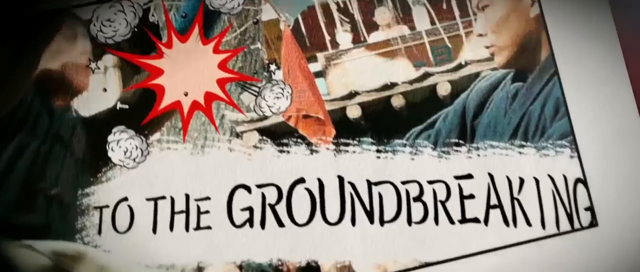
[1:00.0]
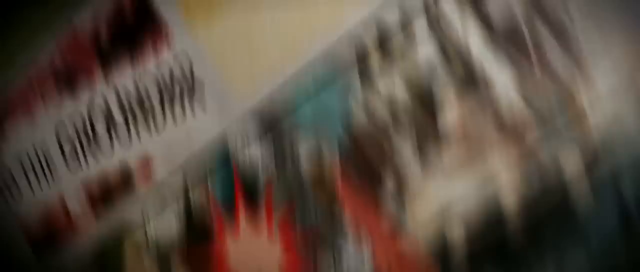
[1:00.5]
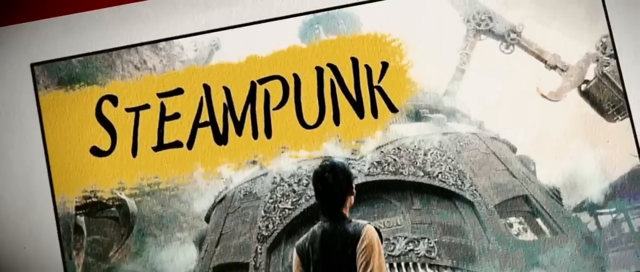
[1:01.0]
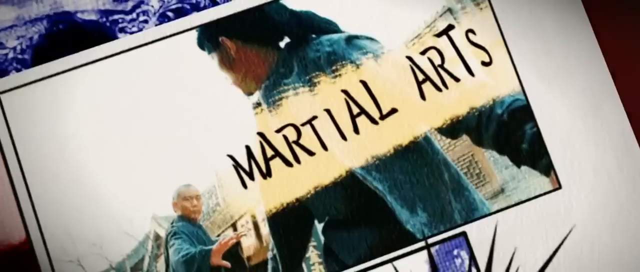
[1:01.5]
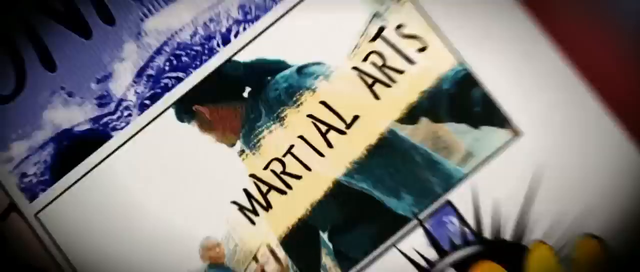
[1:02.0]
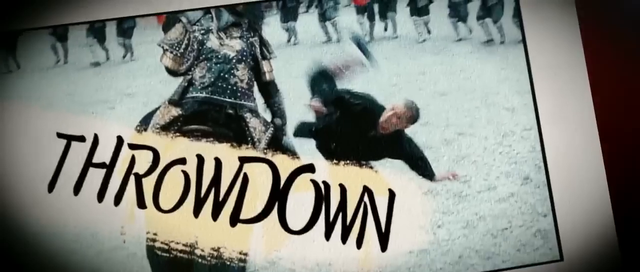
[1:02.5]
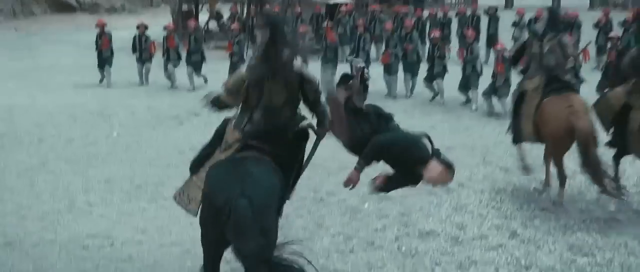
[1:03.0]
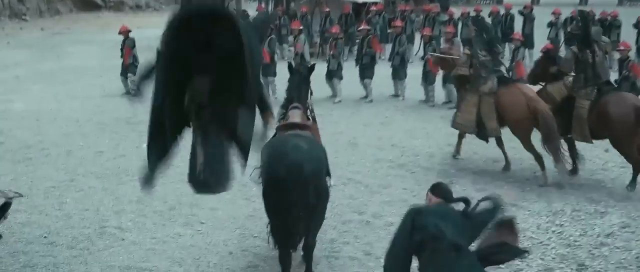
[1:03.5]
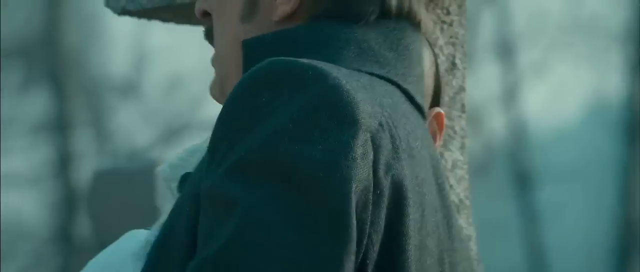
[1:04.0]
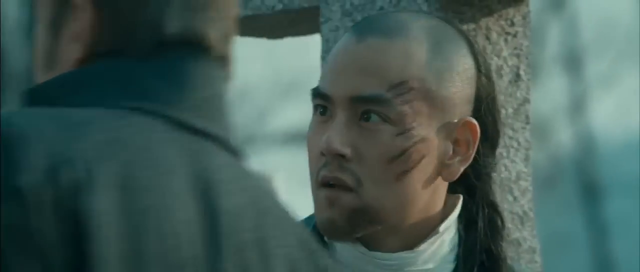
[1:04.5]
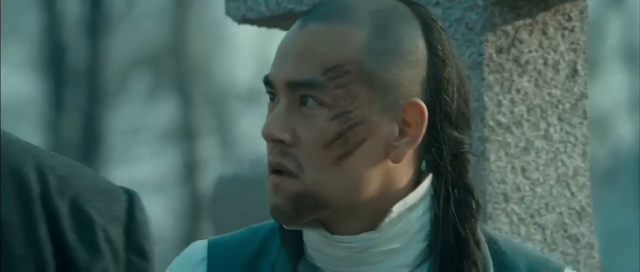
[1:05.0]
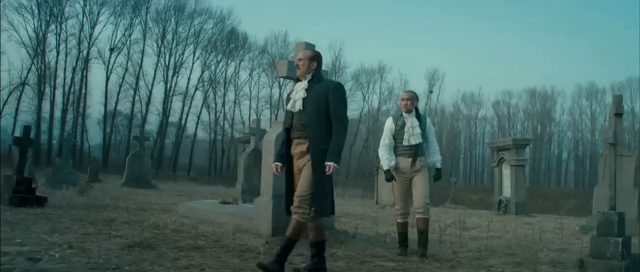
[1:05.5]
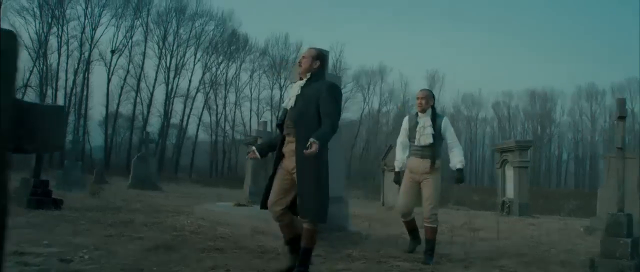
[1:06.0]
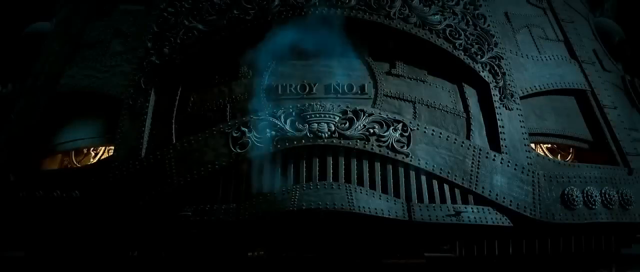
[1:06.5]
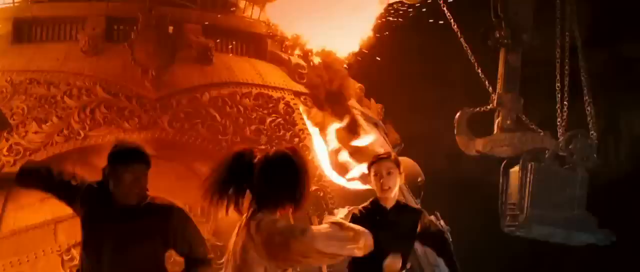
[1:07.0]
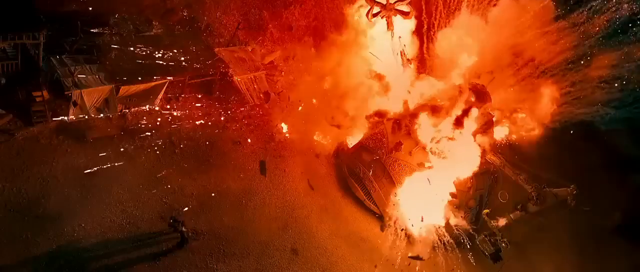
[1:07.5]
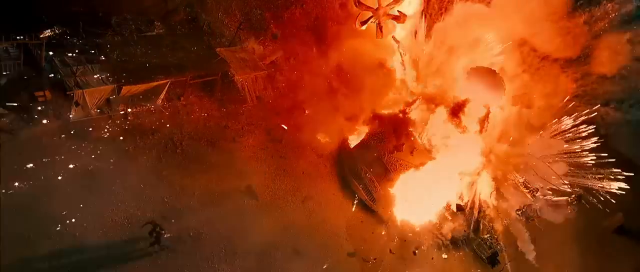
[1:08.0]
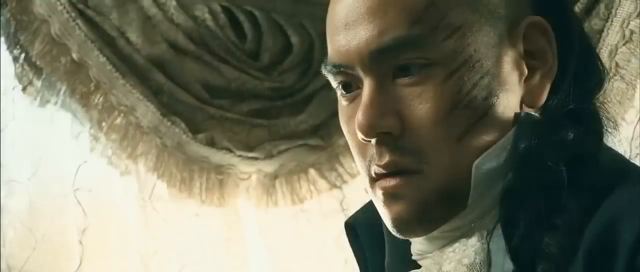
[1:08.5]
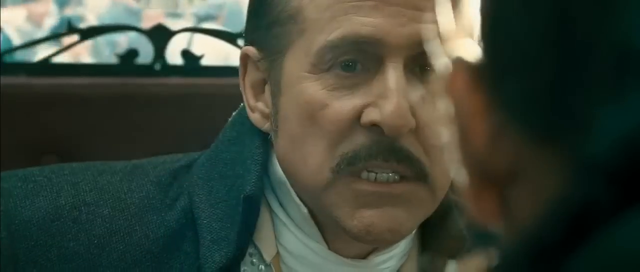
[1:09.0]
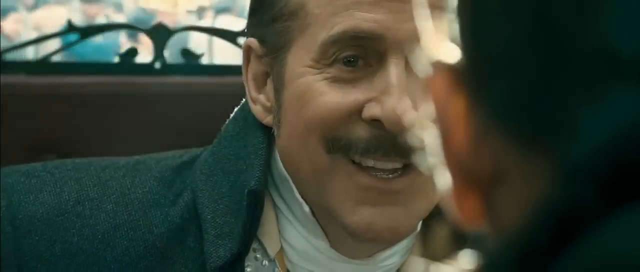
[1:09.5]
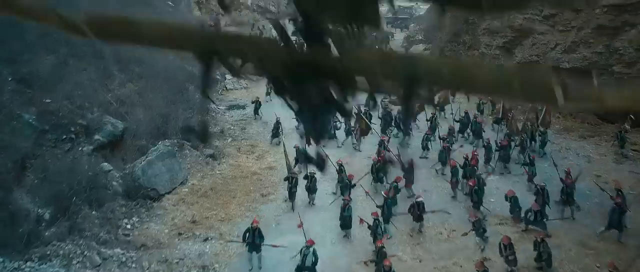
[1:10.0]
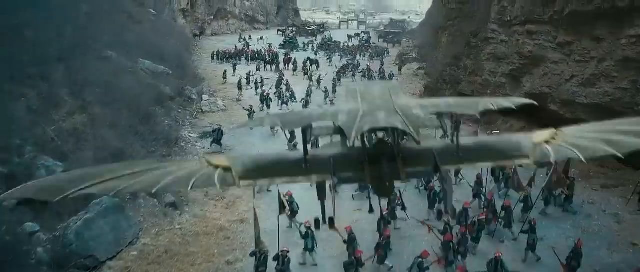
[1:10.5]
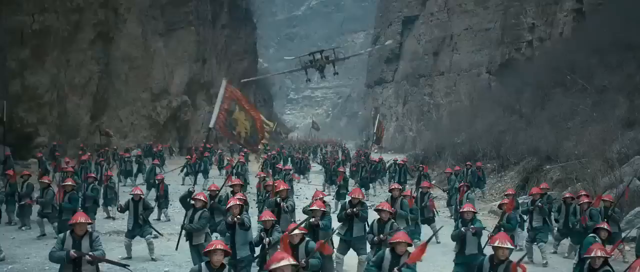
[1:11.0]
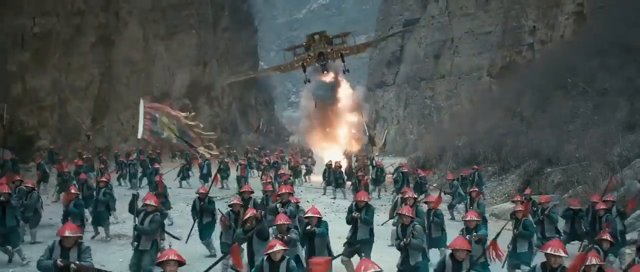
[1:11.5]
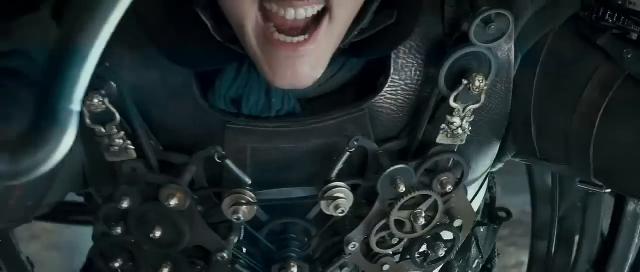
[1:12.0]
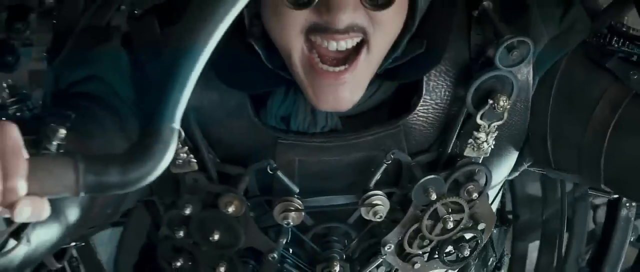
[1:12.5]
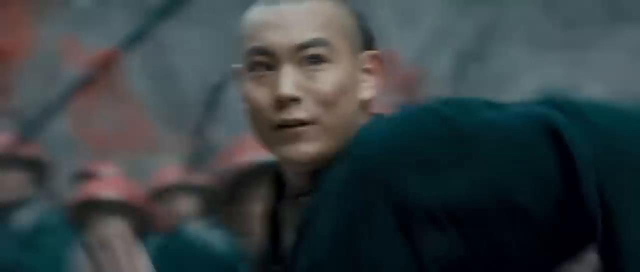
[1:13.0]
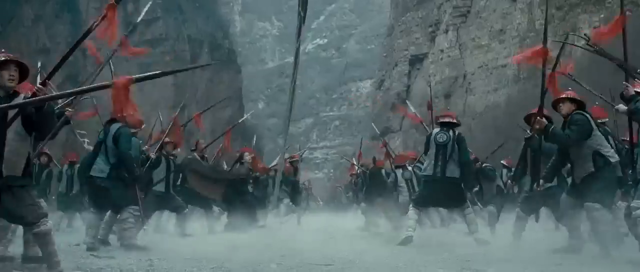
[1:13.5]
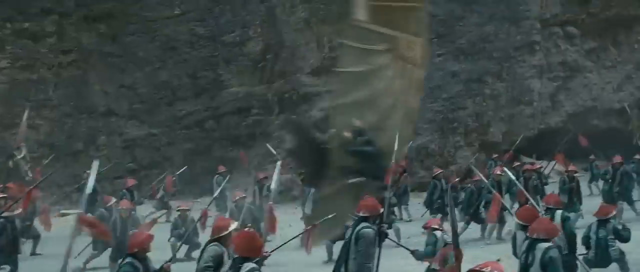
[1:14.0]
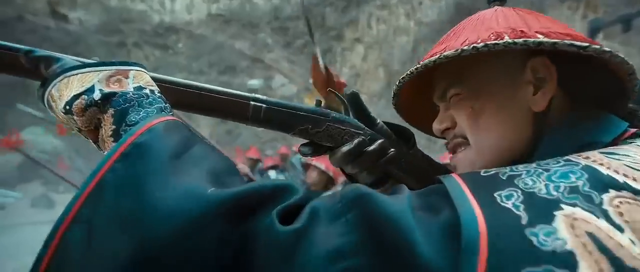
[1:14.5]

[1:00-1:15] Images indicate that the movie is a groundbreaking steampunk martial arts throwdown. A man flies a device with wings and bombs the city; it is similar to an airplane but seems to be operated by a single person, and it seems to be the advanced technology defeating the village. Non-Asian attackers seem to be the adversary, and one of them walks around in what might be some kind of 17th-century costume. Several battlefields are bombed with the flying device. A man has cuts on his face, indicating he has been in a battle. Soldiers fly off horses, and several explosions take place.